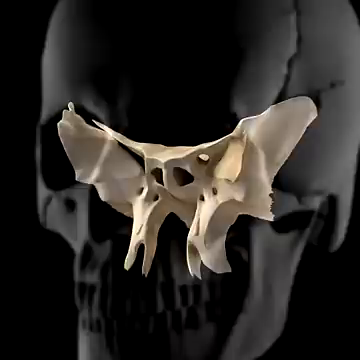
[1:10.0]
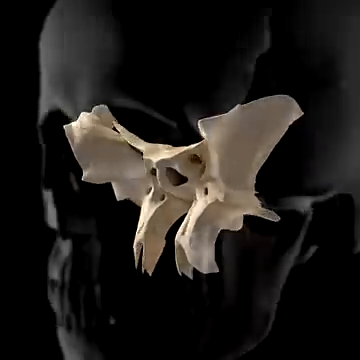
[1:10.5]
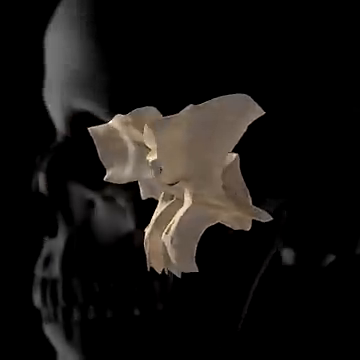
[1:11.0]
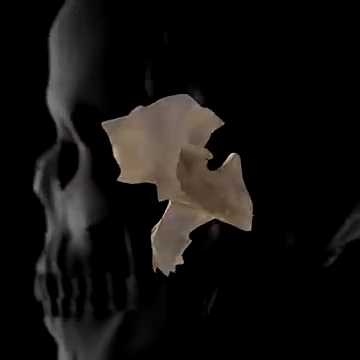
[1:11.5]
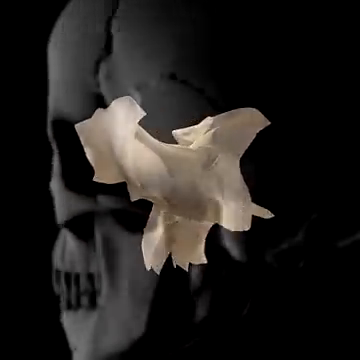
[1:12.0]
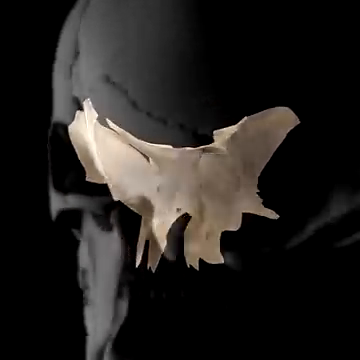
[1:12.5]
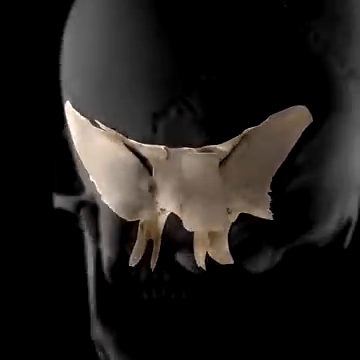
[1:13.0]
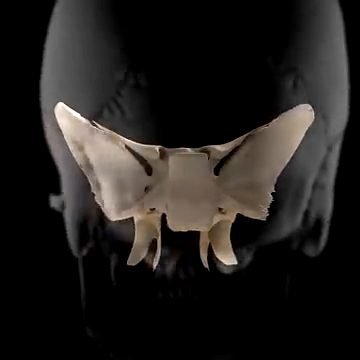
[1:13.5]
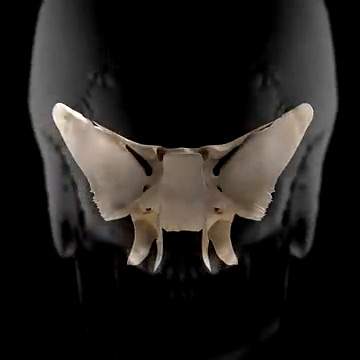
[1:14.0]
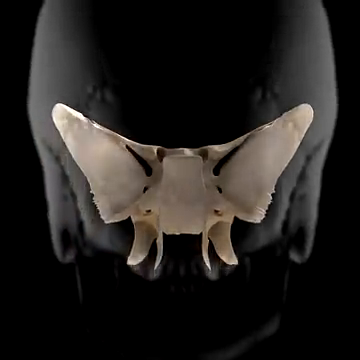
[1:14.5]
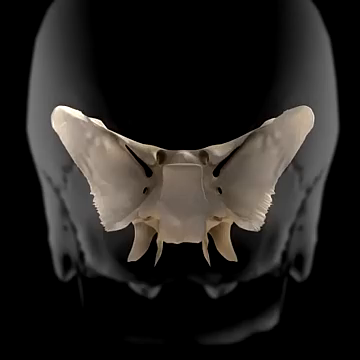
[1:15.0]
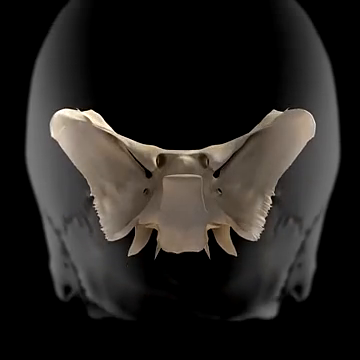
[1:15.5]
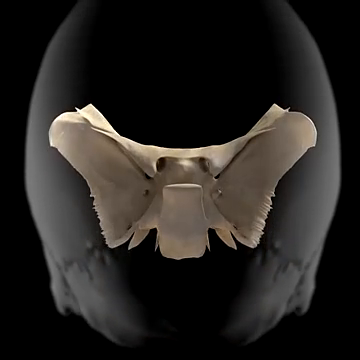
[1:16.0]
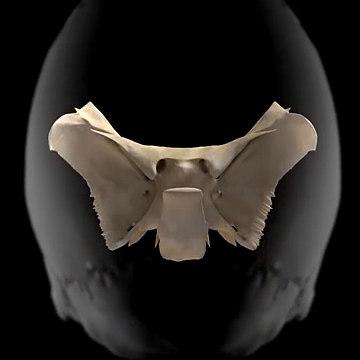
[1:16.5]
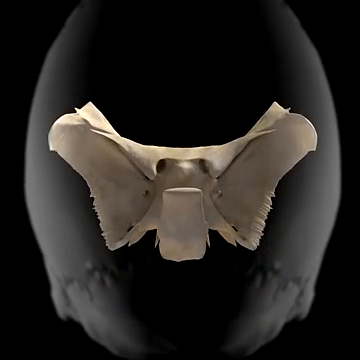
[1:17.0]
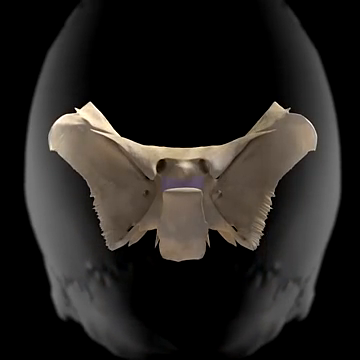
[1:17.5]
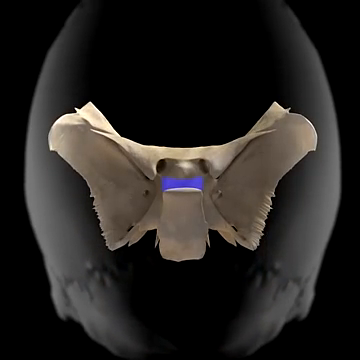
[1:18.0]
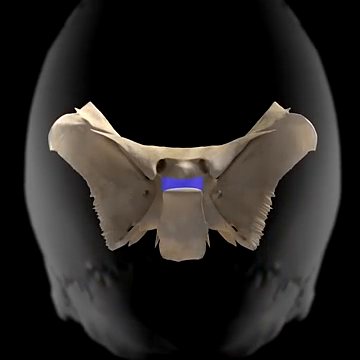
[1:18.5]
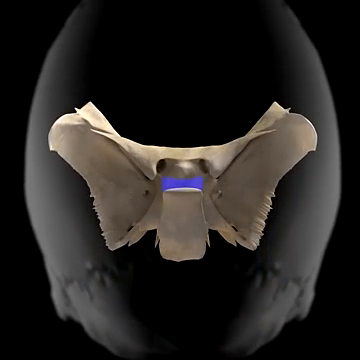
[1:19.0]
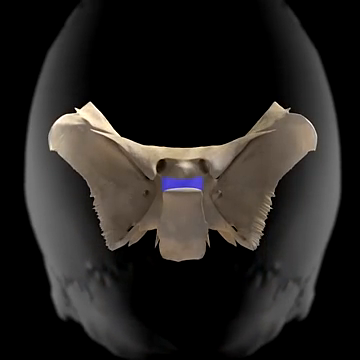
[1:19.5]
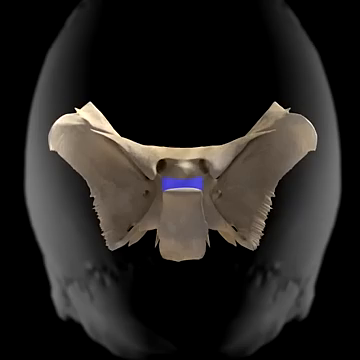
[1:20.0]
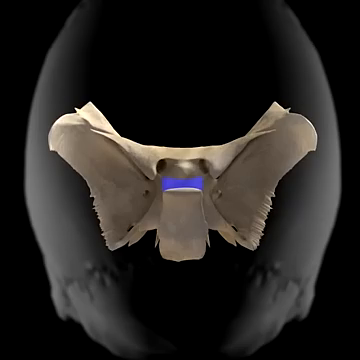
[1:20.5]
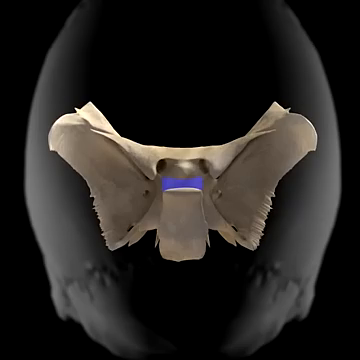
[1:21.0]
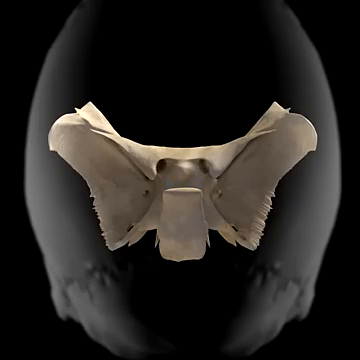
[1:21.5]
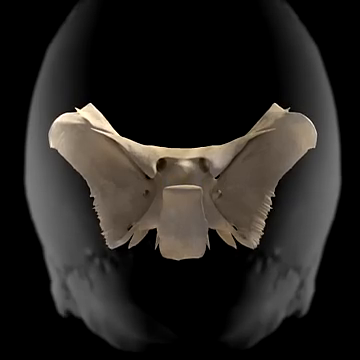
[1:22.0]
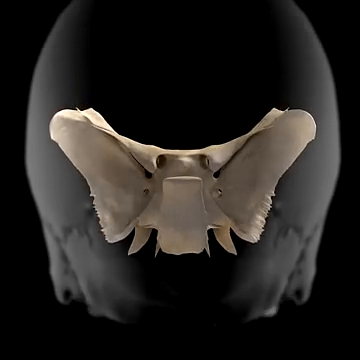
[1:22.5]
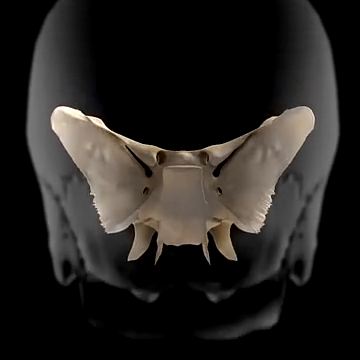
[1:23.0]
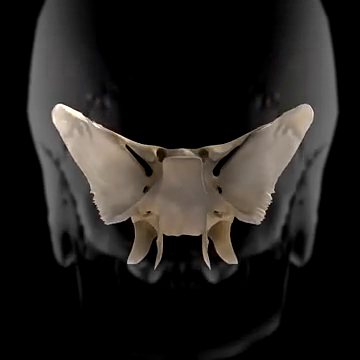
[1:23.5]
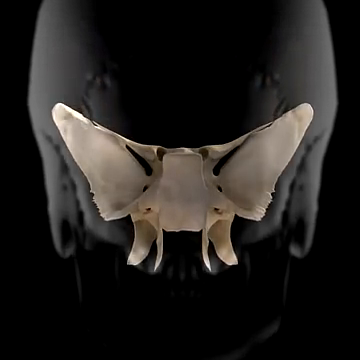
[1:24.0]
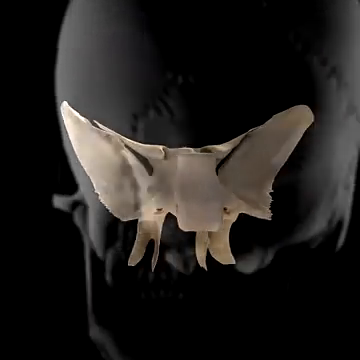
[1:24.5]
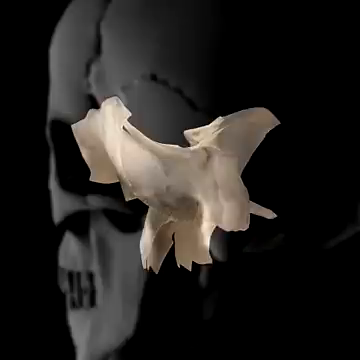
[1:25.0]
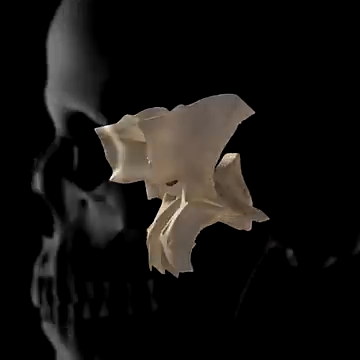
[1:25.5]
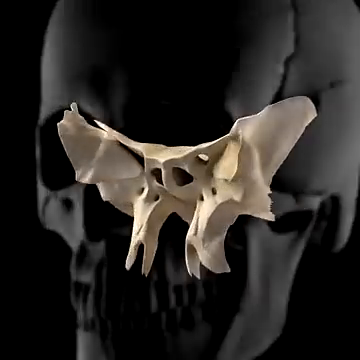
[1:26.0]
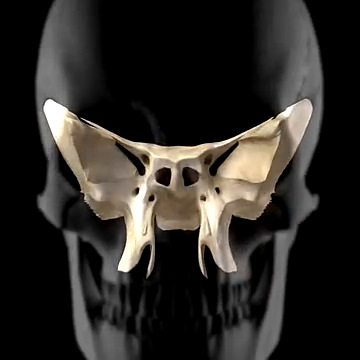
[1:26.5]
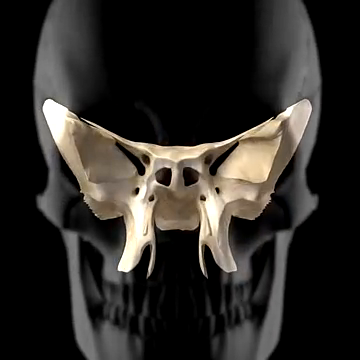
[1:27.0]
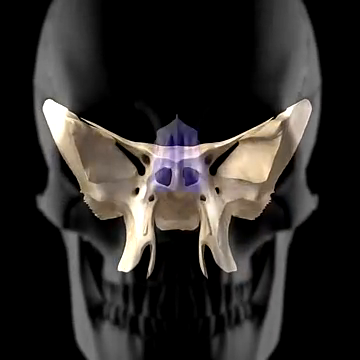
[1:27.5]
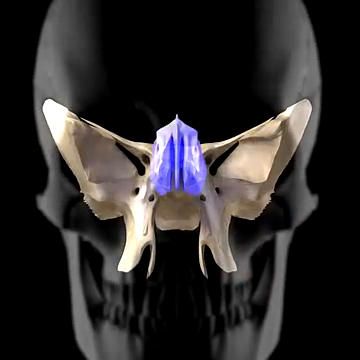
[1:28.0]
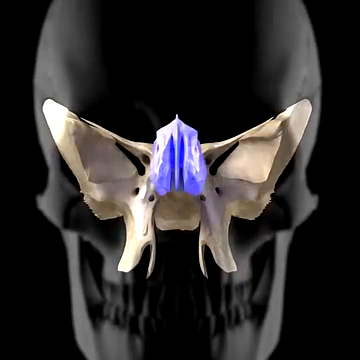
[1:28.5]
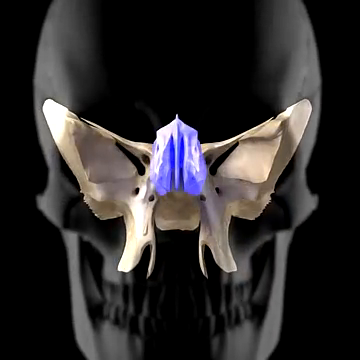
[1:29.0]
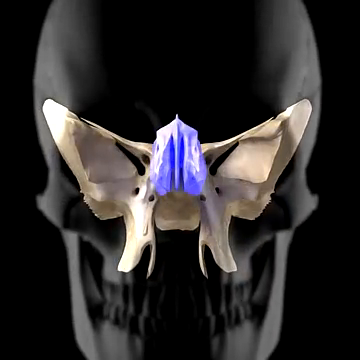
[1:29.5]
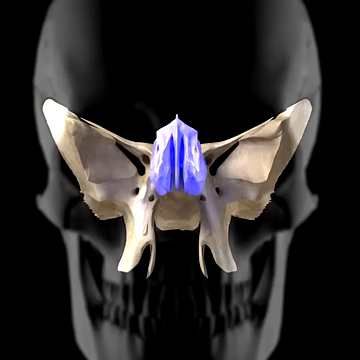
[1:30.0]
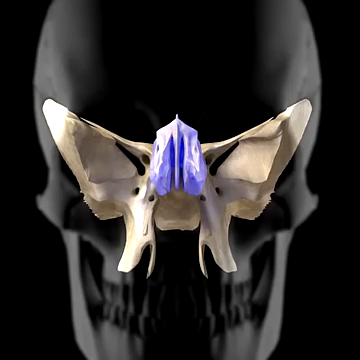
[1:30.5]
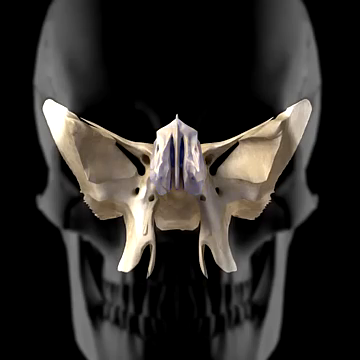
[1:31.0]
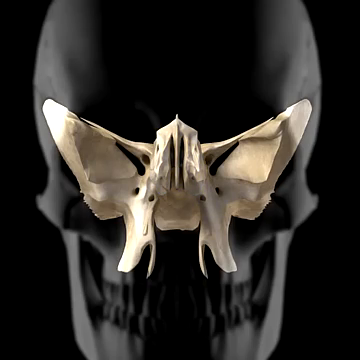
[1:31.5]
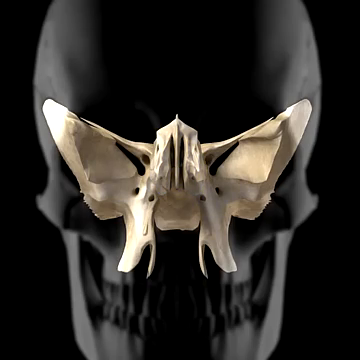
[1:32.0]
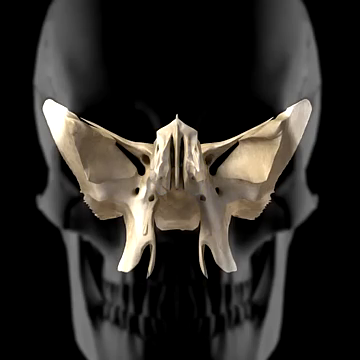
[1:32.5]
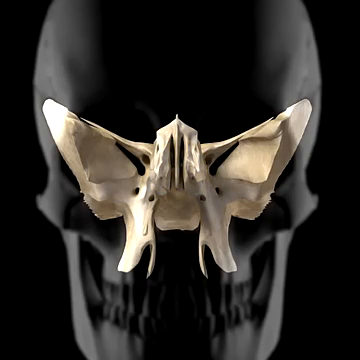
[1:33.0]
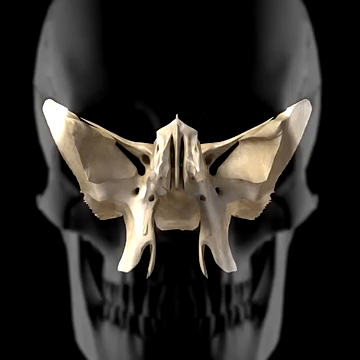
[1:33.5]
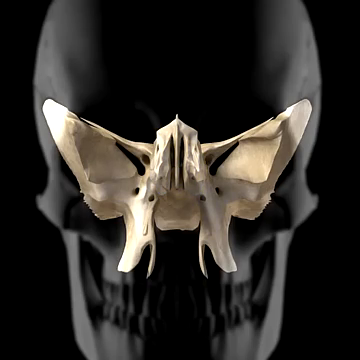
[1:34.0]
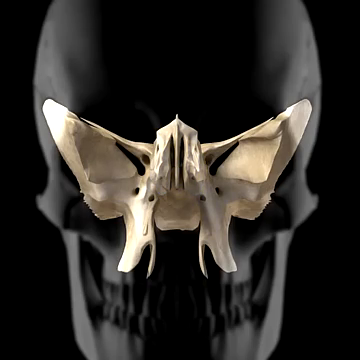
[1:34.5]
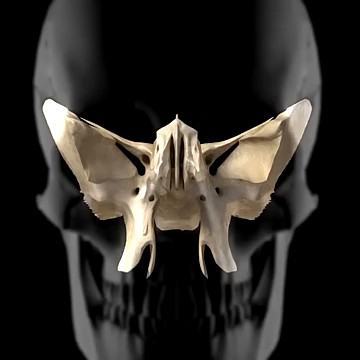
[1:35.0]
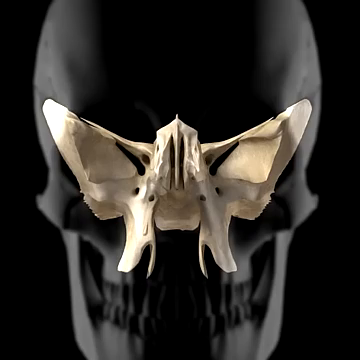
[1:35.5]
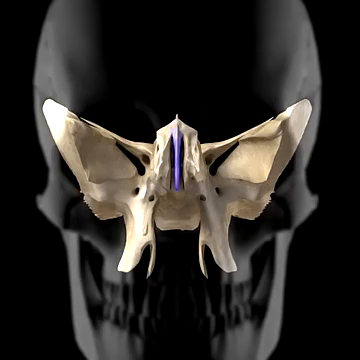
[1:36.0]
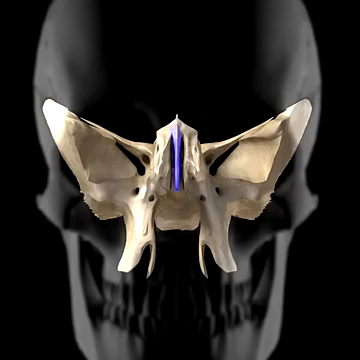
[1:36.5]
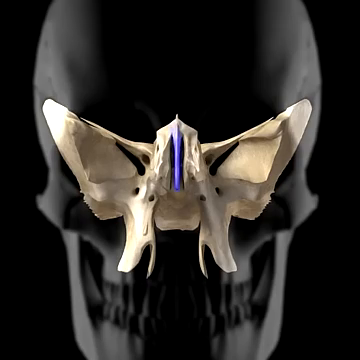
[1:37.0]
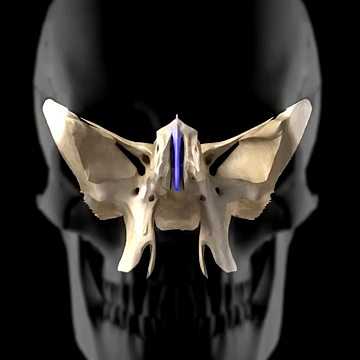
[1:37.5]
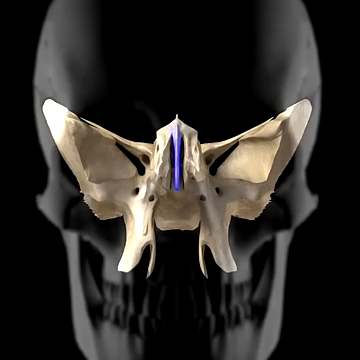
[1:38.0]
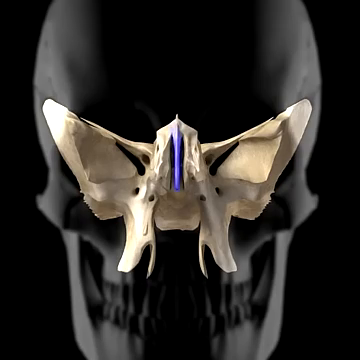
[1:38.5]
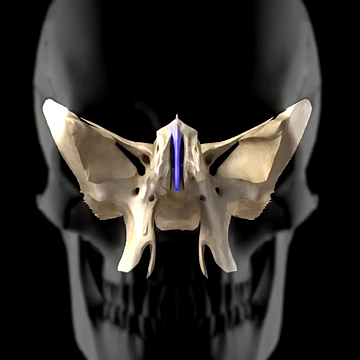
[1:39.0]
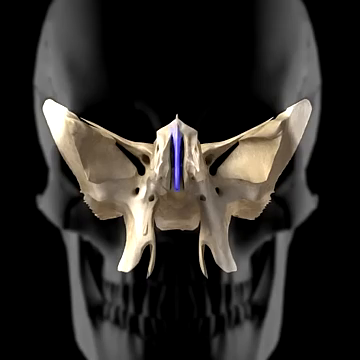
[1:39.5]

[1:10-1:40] The skull zooms in and turns gray, taking up nearly all of the frame as a background. In the center front, in white, in front of the skull background, is the butterfly piece of the skull, which was separated when the skull separated at each joint. The background skull and the butterfly bone rotate together 180 degrees to the viewer's left, ending up facing away from the viewer. Both then animate to look straight up, away from the viewer, and the back piece of the butterfly bone is highlighted in purple. The skull and butterfly bone then look back down to a normal position and rotate to the viewer's left until they face the viewer again and stop. The top back of the butterfly bone is now highlighted in purple.